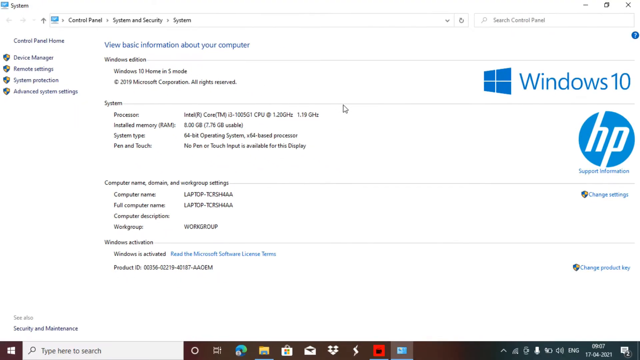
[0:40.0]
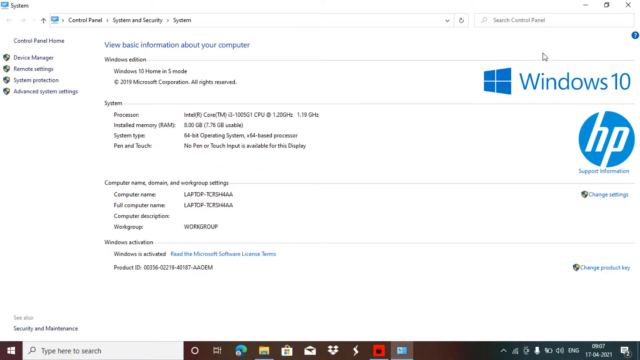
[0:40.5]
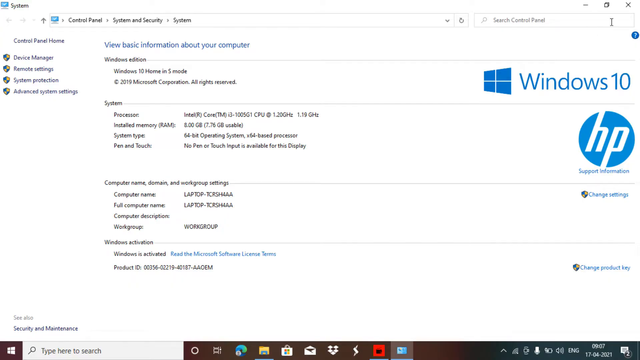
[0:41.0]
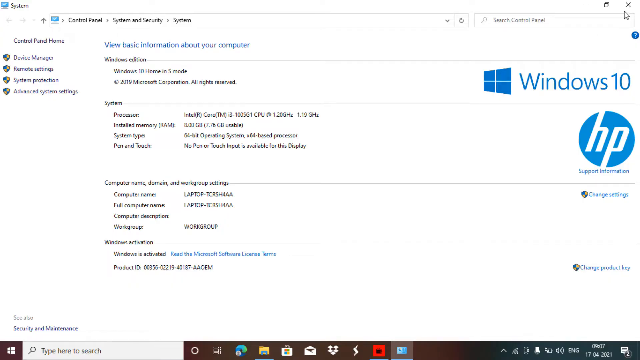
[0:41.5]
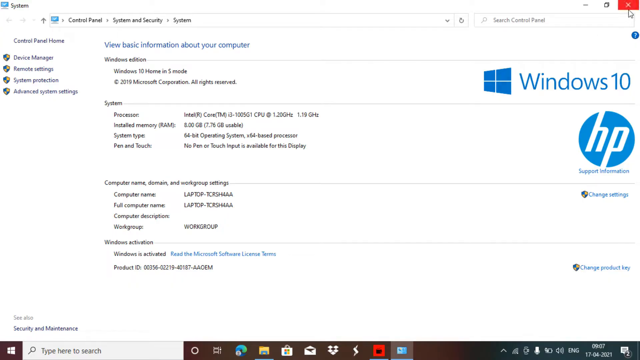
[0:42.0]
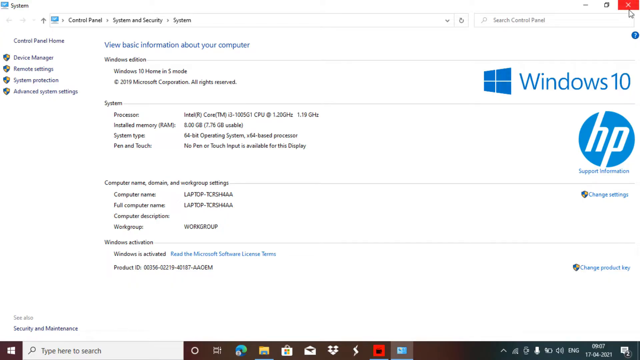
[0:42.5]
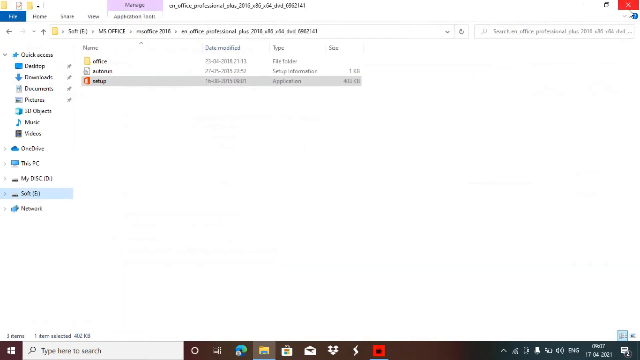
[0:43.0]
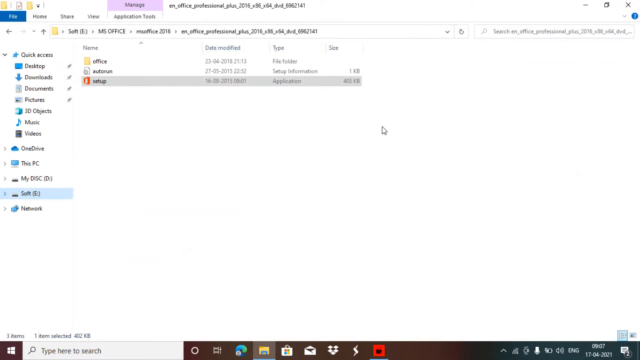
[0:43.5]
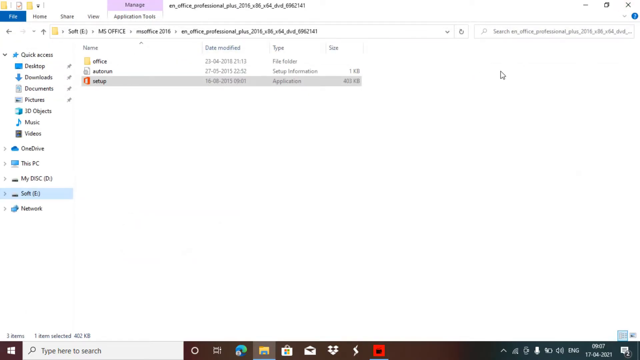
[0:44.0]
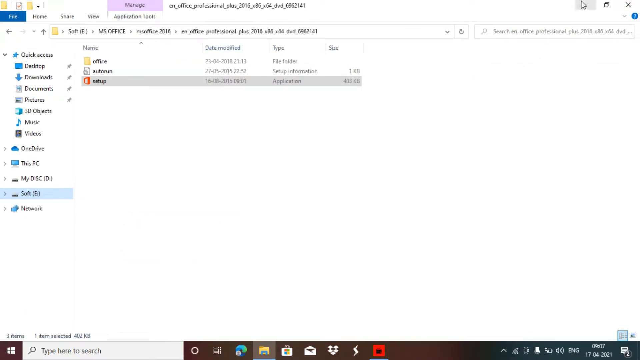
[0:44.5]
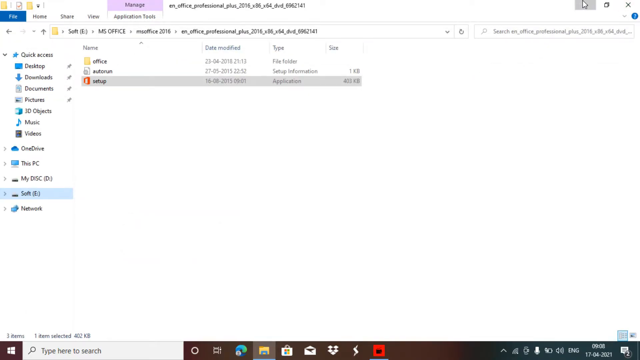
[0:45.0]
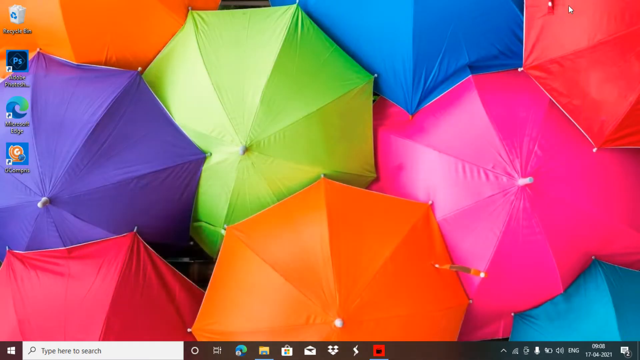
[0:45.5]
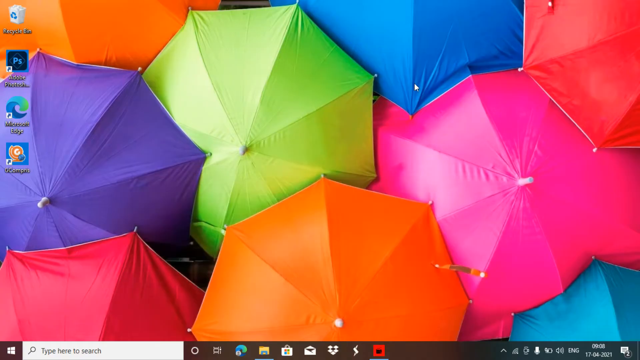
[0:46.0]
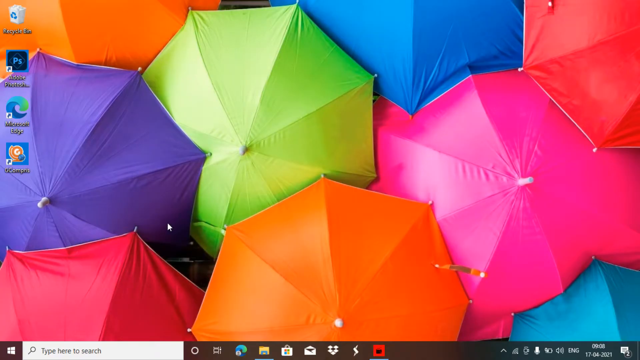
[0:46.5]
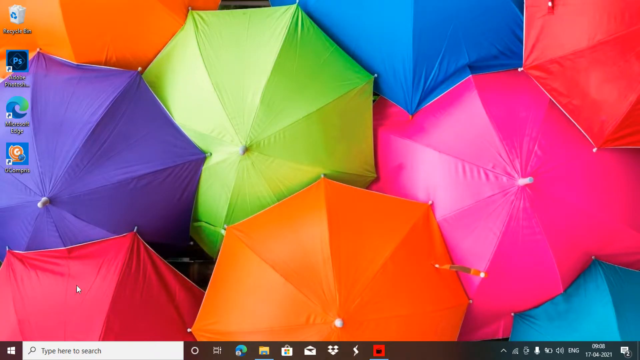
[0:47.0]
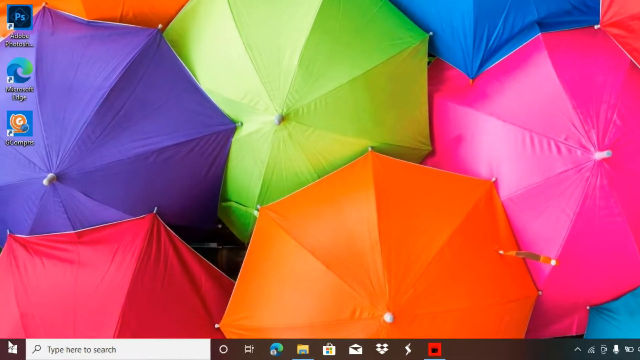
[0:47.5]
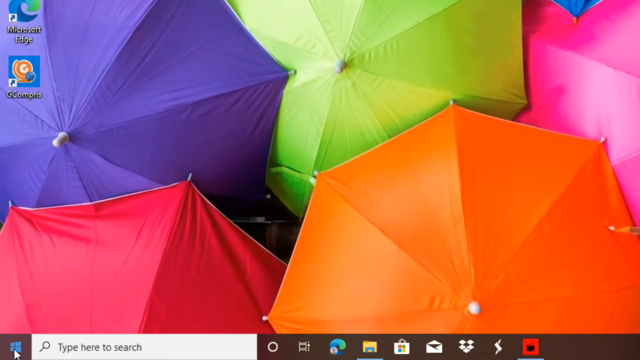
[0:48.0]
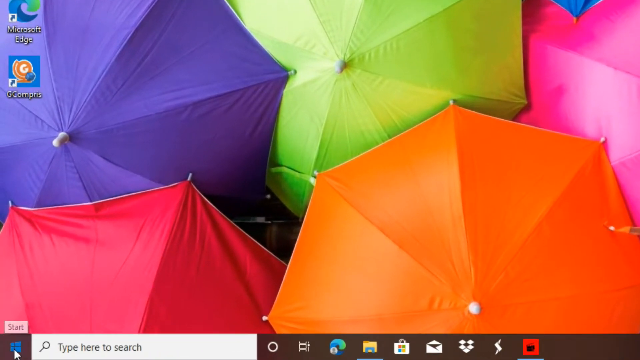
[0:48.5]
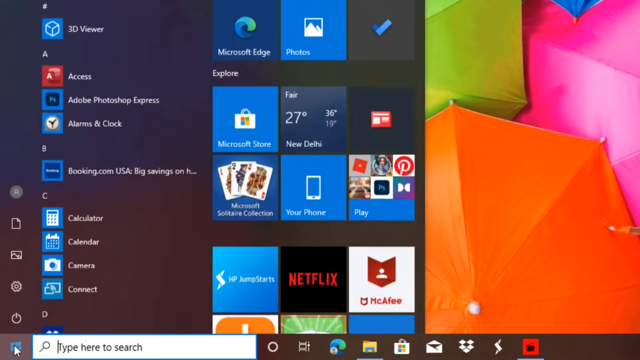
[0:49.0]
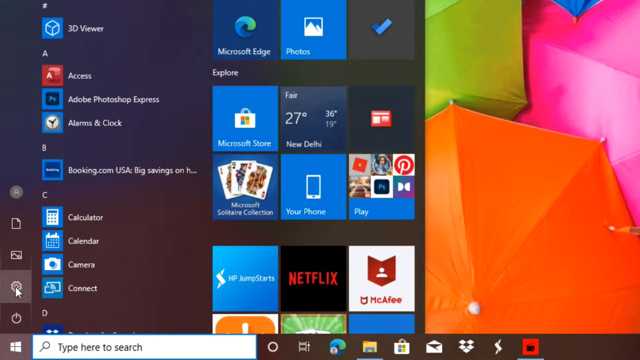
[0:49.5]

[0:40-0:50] The person closes the Properties page and minimizes the file folder, then moves the mouse down to the Start symbol as the view kind of zooms in toward it, and clicks on Settings before the shot cuts off. The Properties page has a white background, and the file folder also has a white background with many side menus.